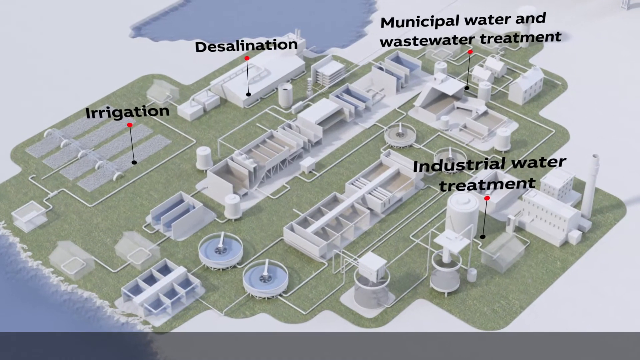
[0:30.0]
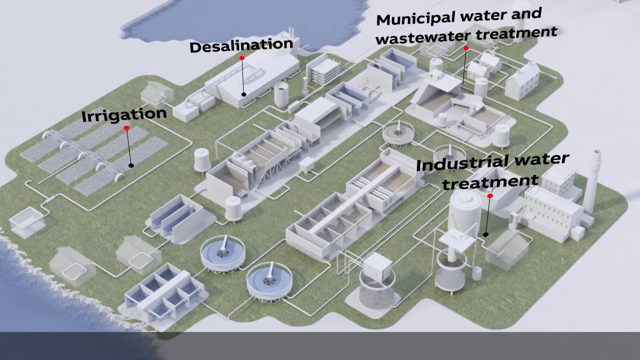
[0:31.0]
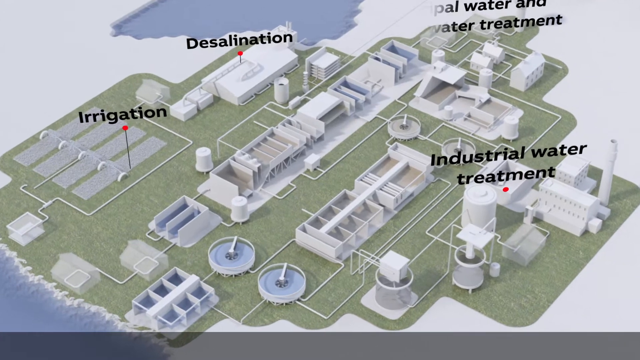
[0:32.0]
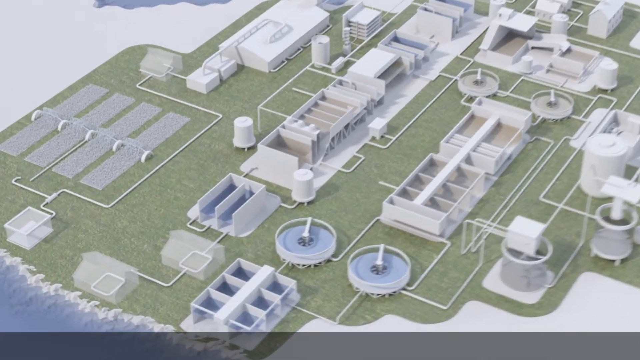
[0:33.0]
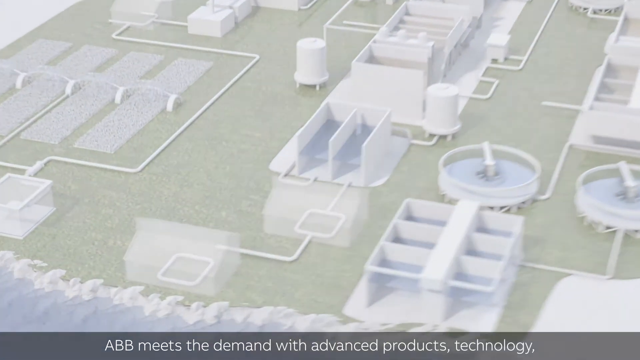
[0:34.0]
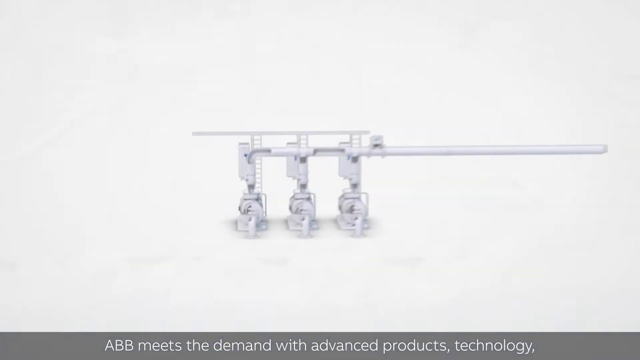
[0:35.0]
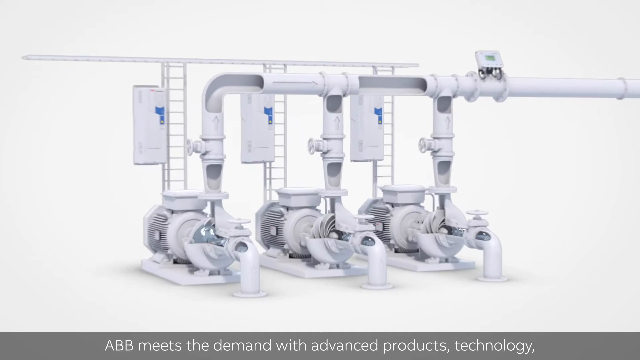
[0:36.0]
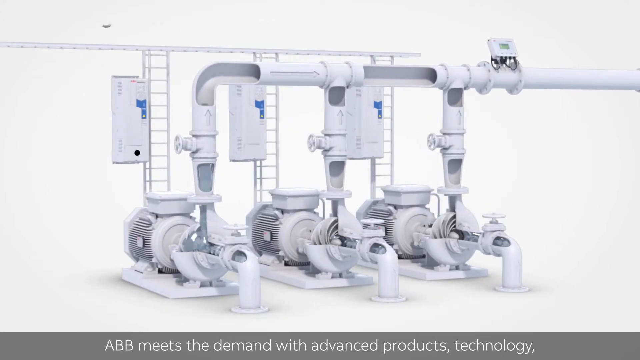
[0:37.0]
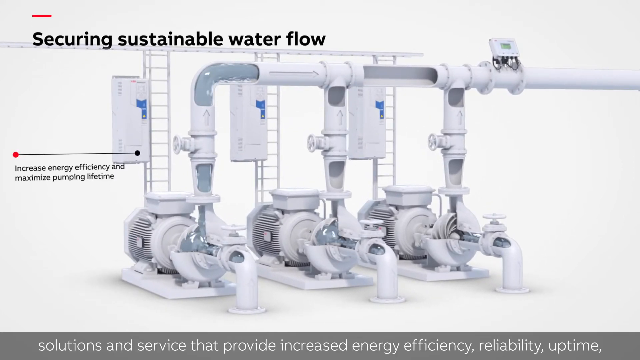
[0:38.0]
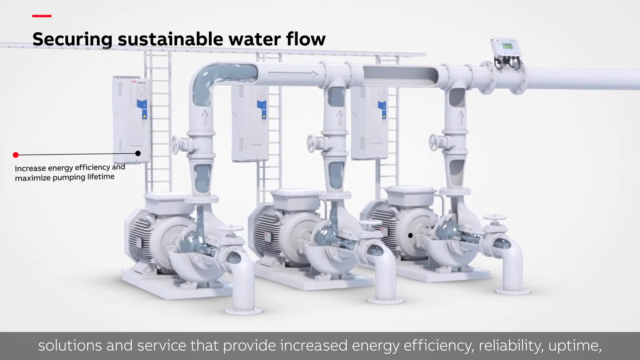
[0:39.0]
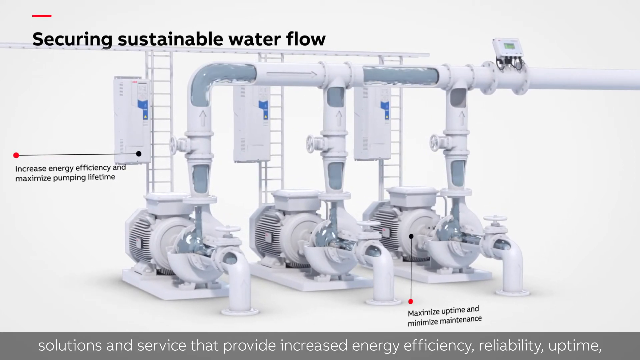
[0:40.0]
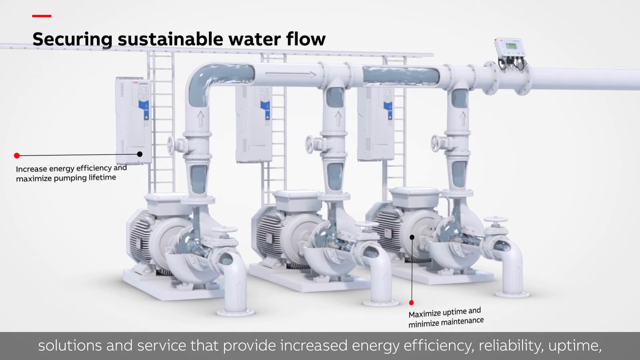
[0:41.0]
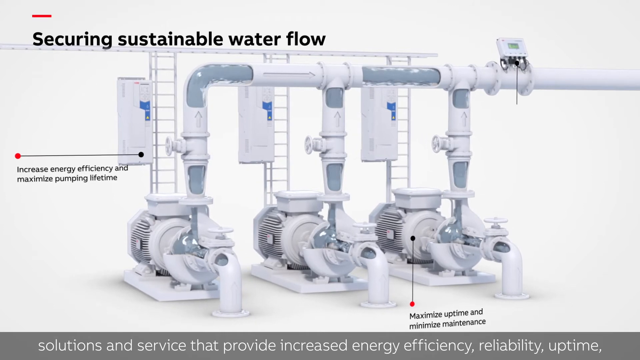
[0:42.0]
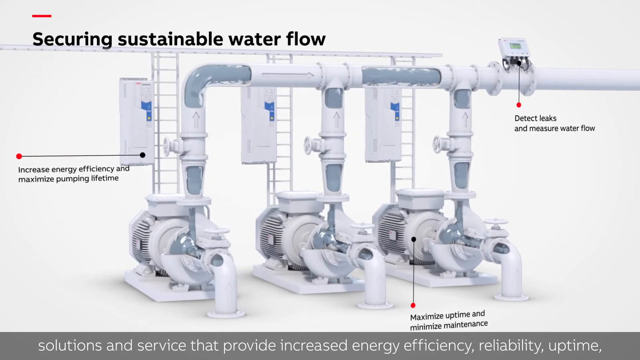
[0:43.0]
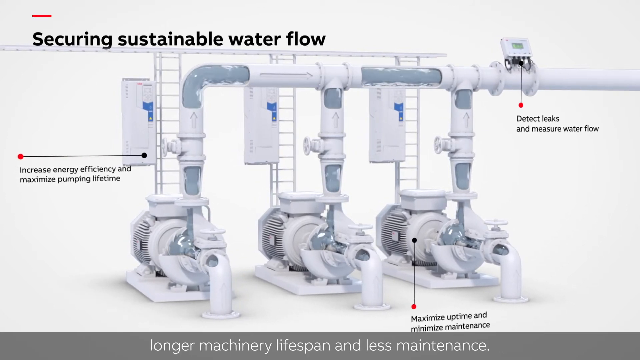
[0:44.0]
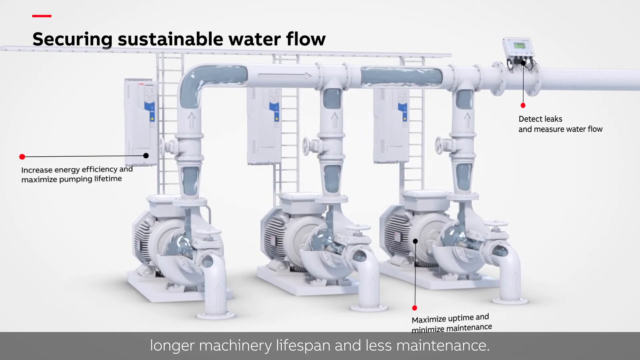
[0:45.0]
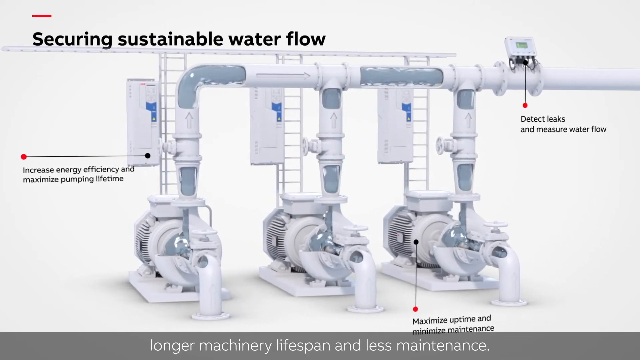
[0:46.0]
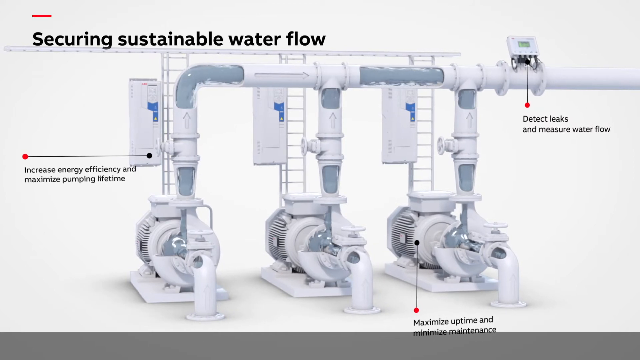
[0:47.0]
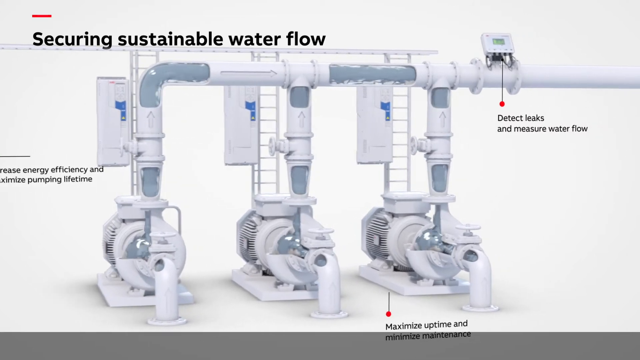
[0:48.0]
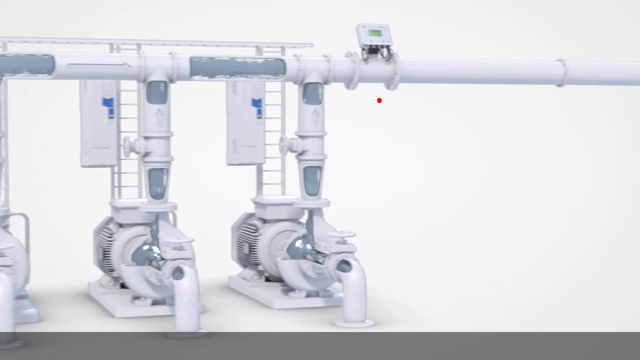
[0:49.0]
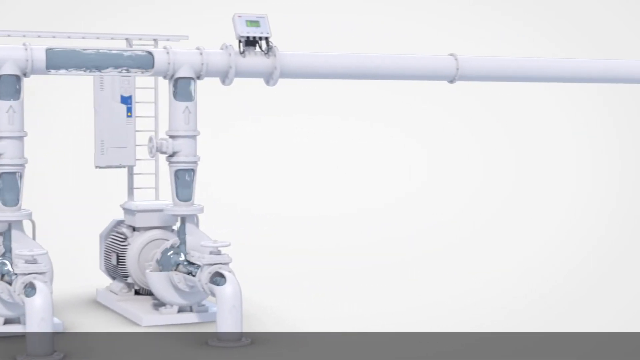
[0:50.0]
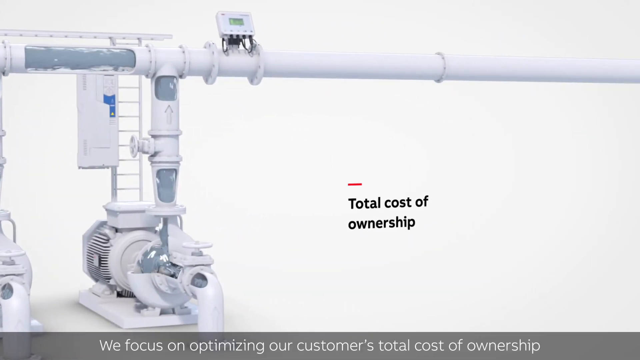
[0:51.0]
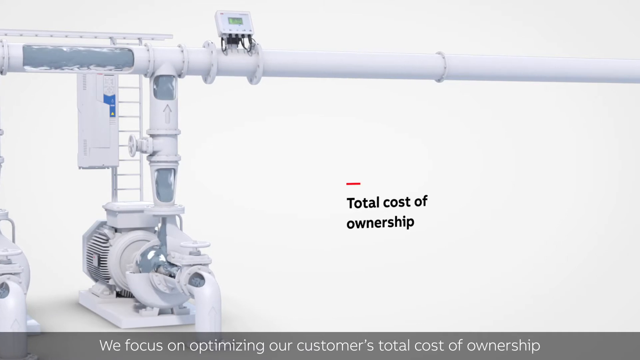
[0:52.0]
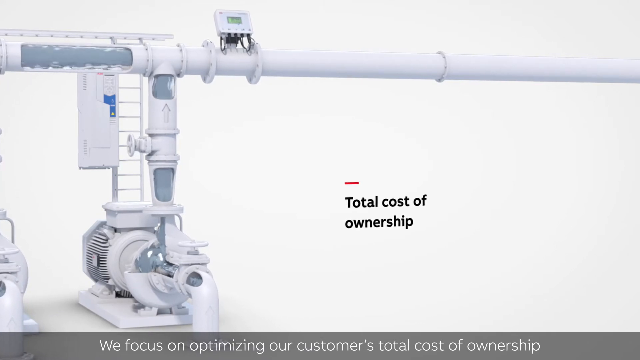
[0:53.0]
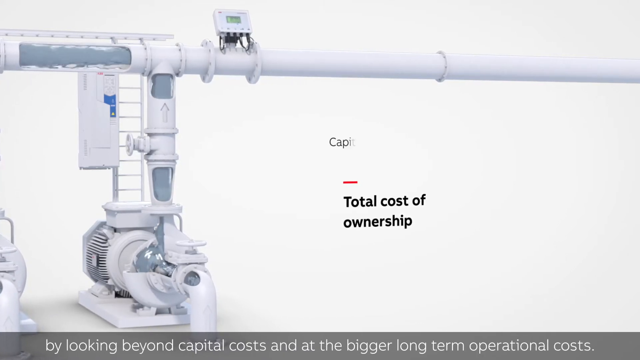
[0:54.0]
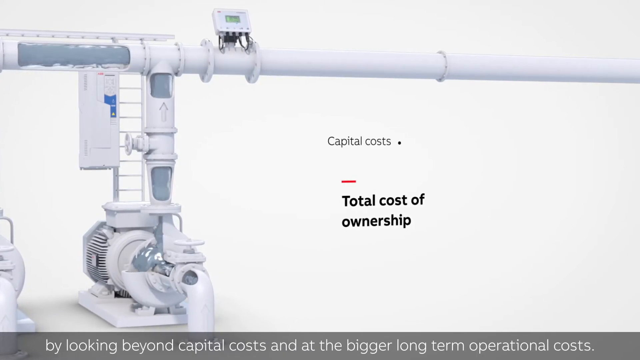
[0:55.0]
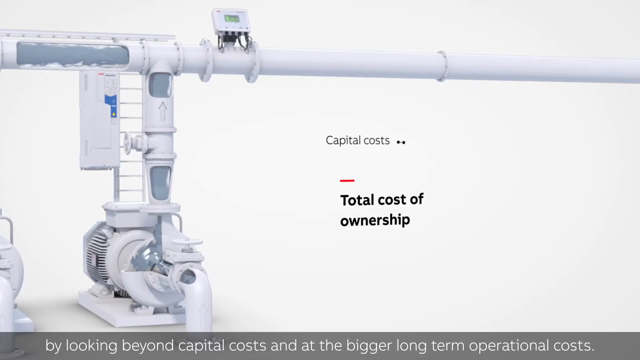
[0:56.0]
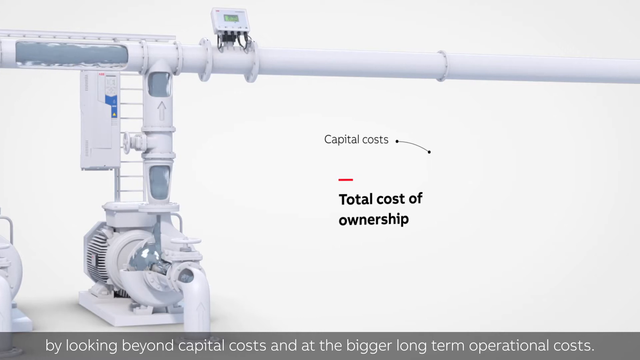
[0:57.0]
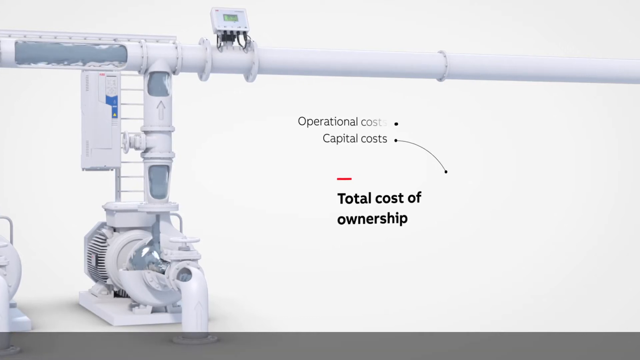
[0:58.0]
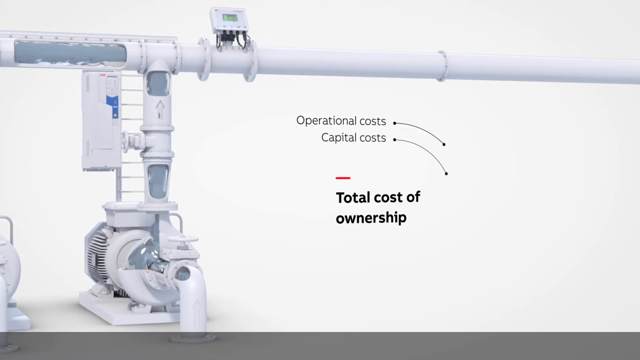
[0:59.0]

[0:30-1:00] The diagram shows a lot of buildings that need to be supplied with water, including areas for irrigation and desalination. No humans are shown; there are only big pipes, three of which are visible, and the pipes look big. Total ownership costs, capital costs and operational costs are indicated in connection with these pipes, which supply the whole town.